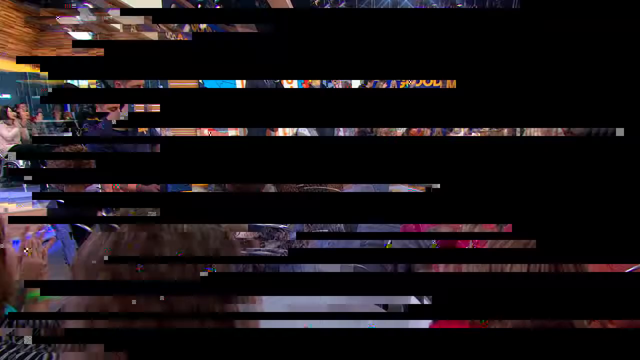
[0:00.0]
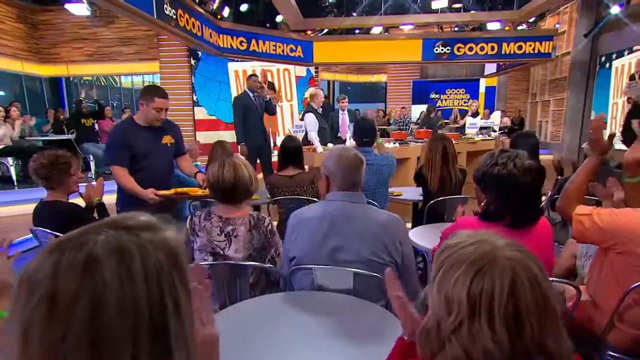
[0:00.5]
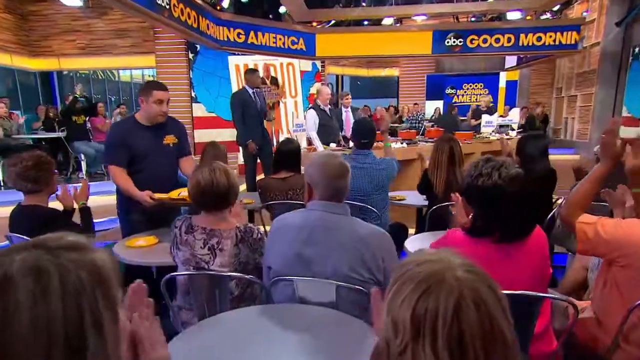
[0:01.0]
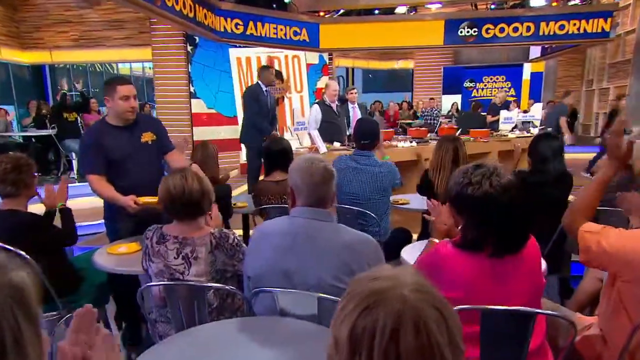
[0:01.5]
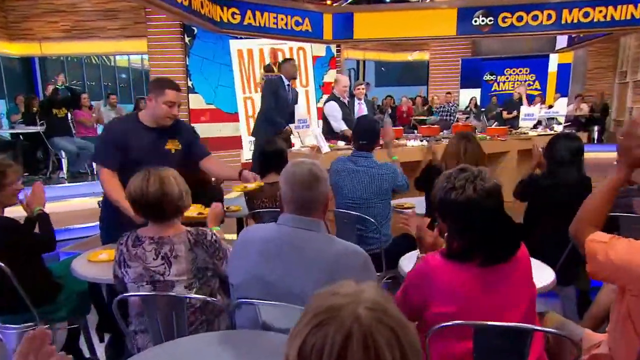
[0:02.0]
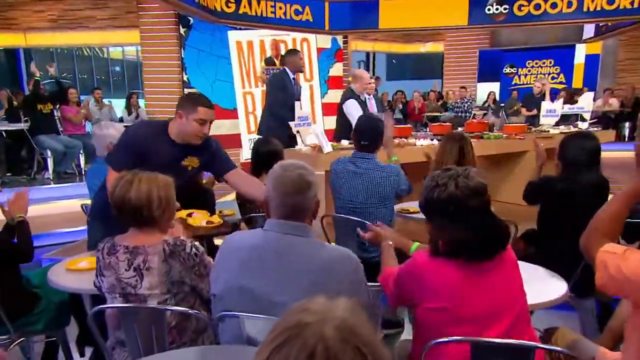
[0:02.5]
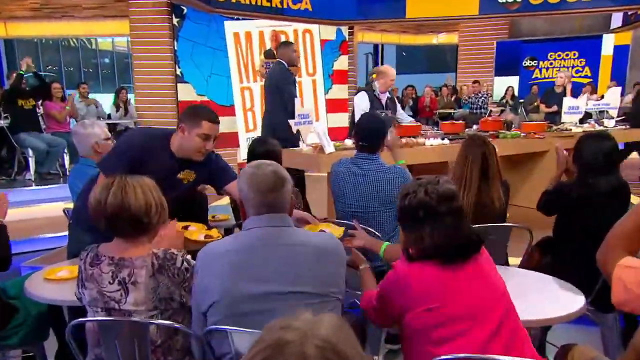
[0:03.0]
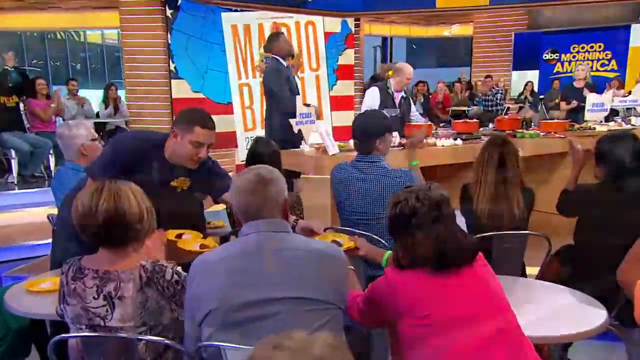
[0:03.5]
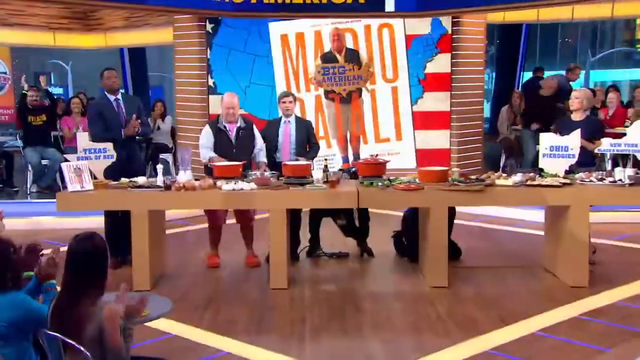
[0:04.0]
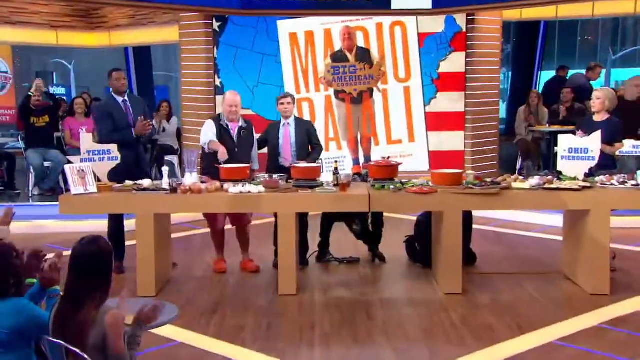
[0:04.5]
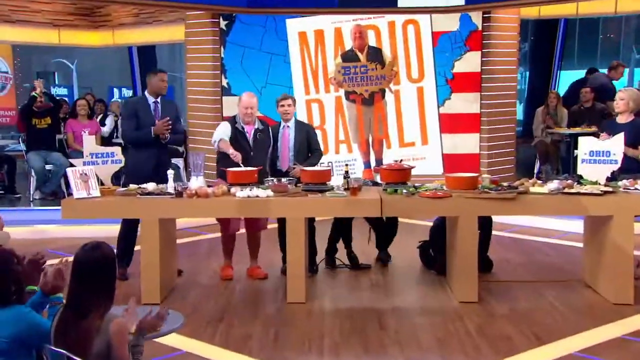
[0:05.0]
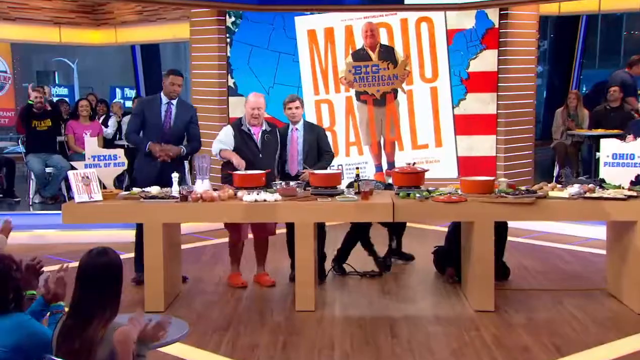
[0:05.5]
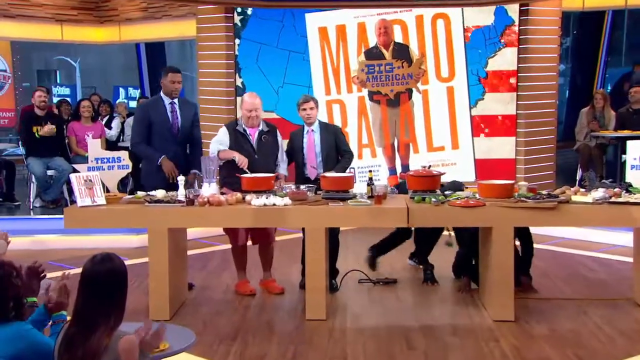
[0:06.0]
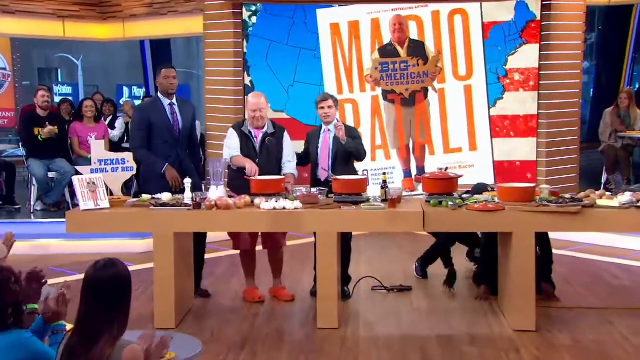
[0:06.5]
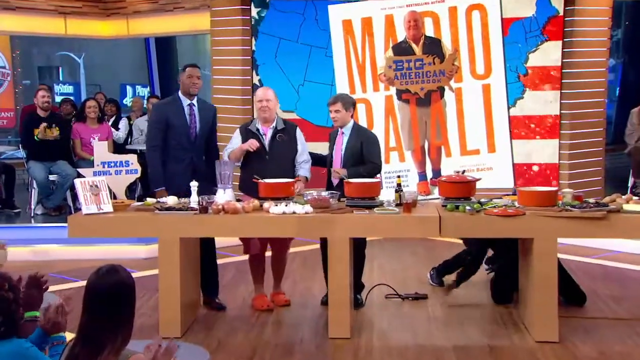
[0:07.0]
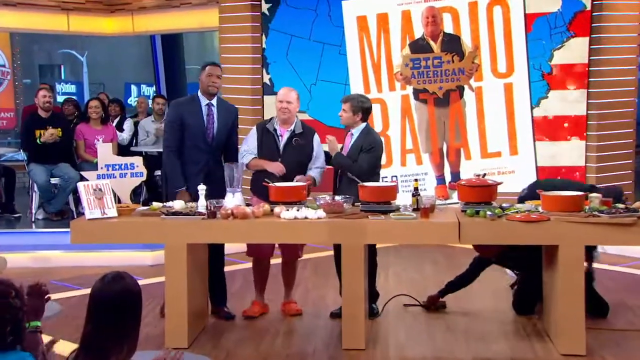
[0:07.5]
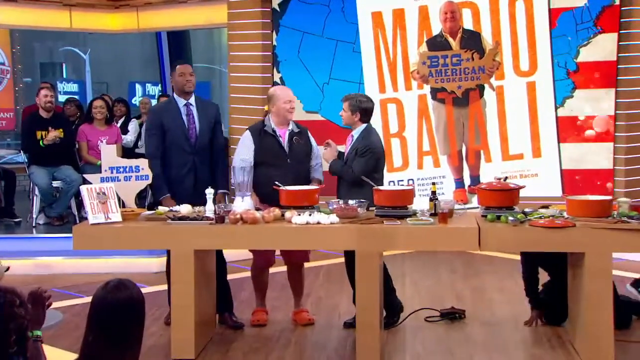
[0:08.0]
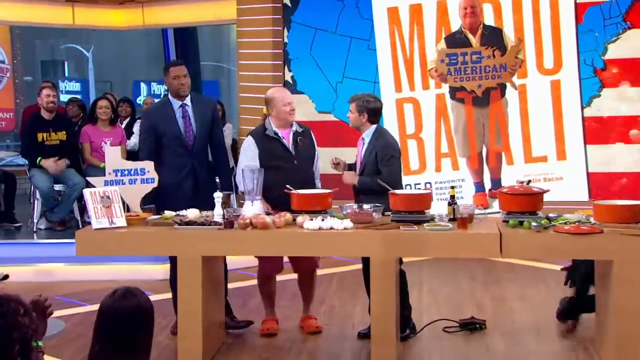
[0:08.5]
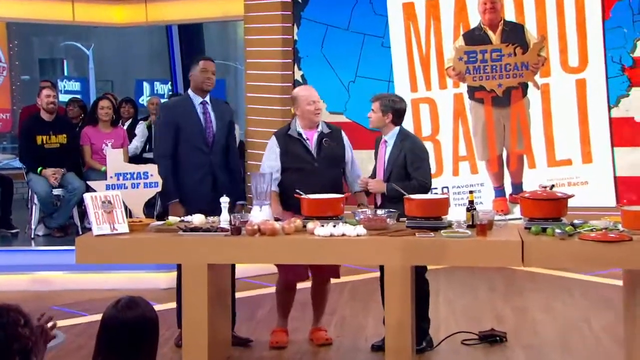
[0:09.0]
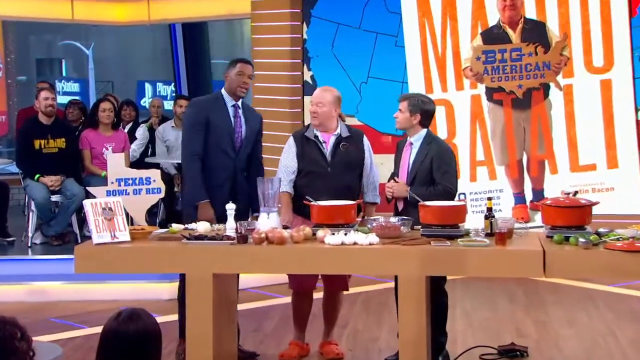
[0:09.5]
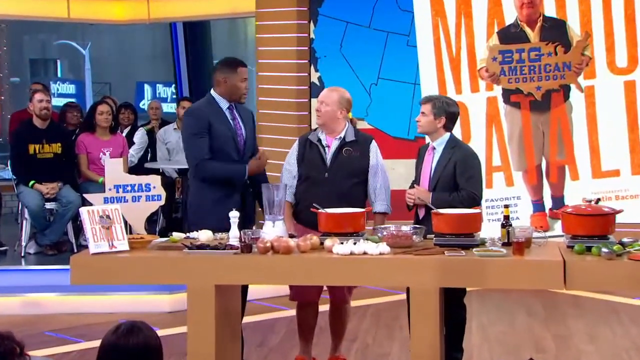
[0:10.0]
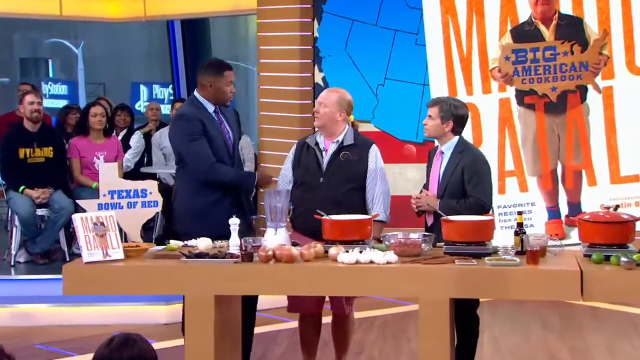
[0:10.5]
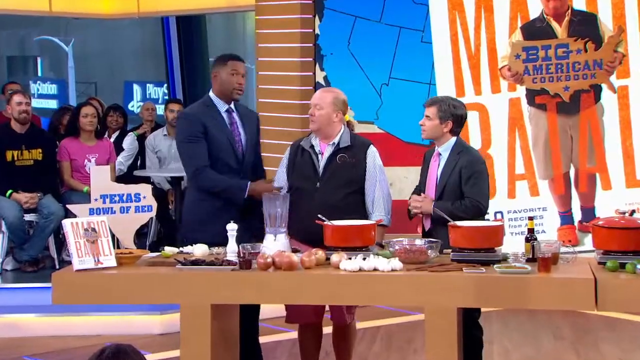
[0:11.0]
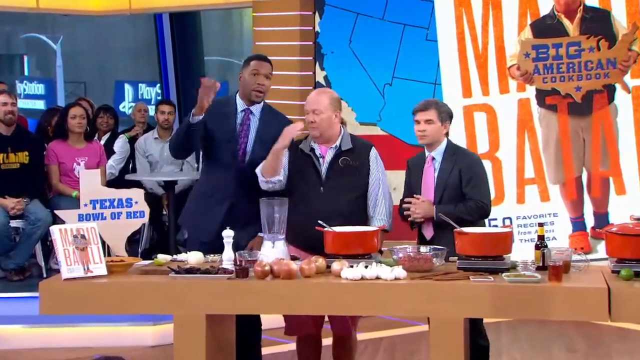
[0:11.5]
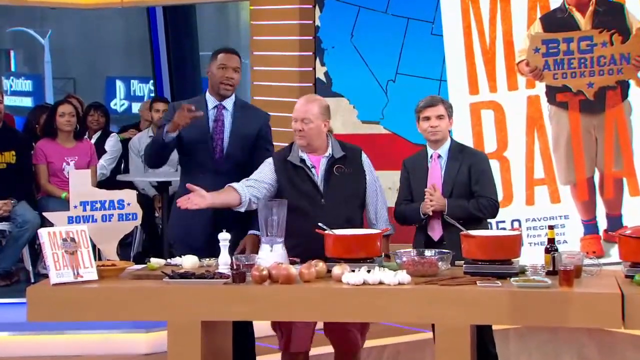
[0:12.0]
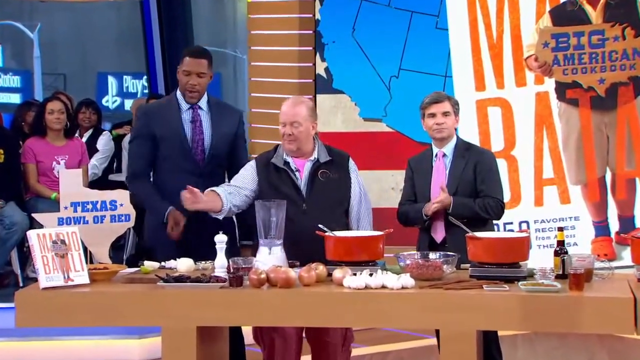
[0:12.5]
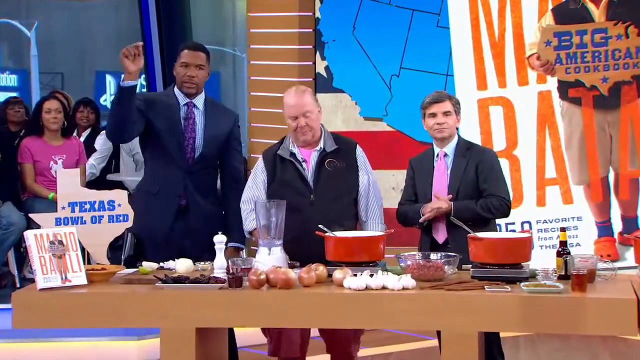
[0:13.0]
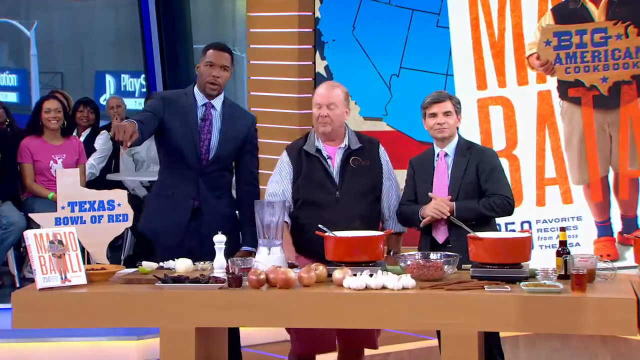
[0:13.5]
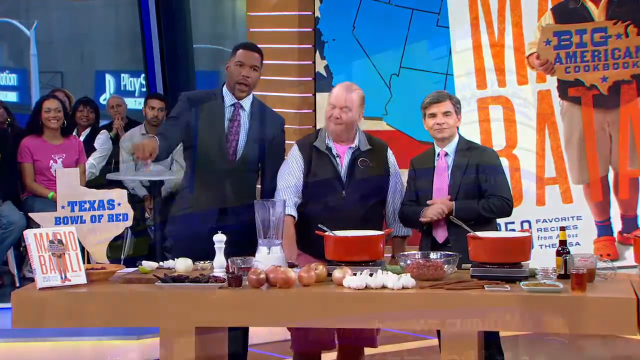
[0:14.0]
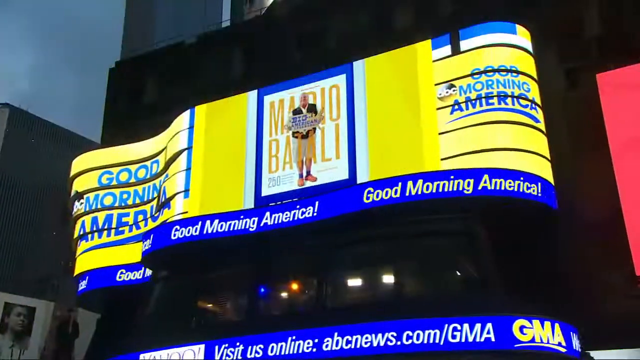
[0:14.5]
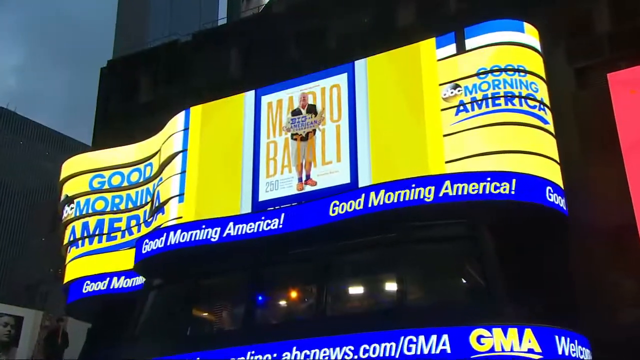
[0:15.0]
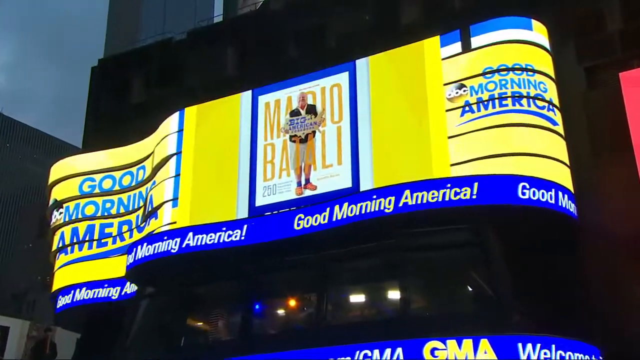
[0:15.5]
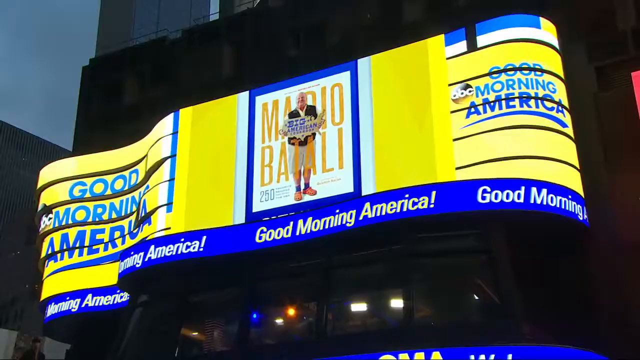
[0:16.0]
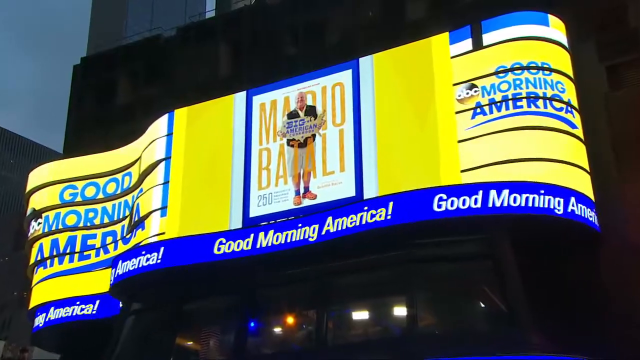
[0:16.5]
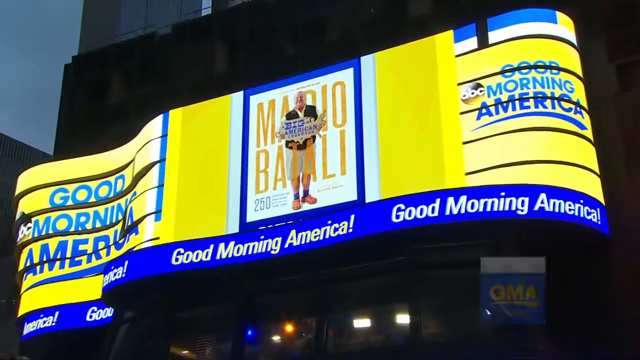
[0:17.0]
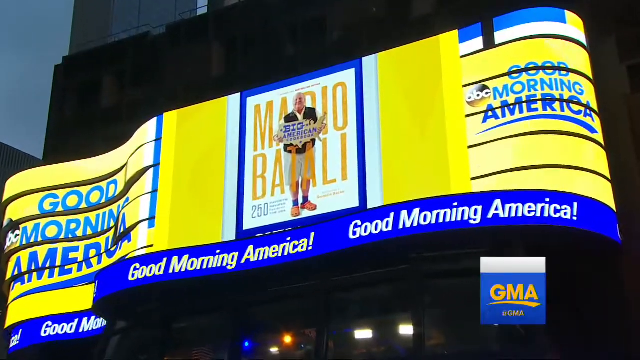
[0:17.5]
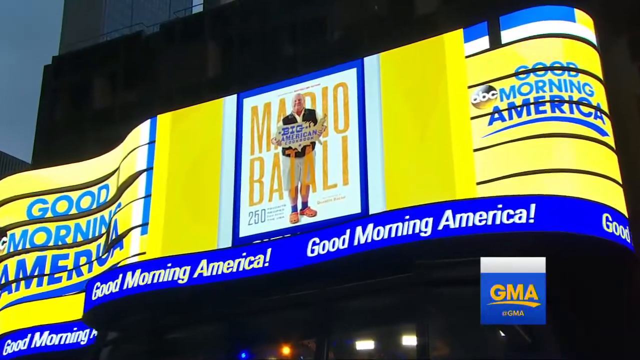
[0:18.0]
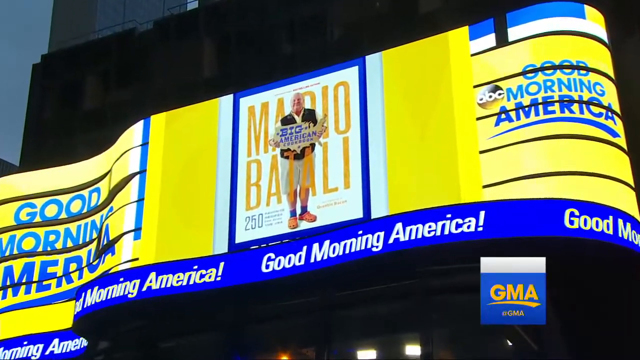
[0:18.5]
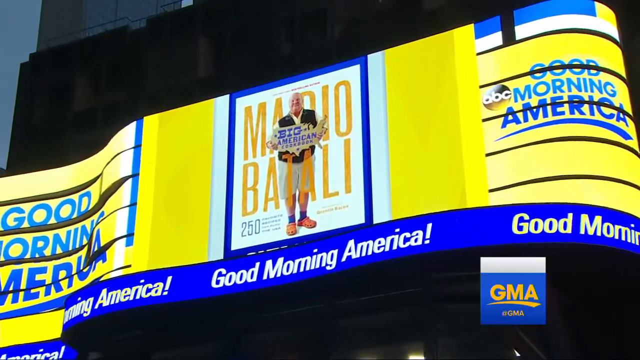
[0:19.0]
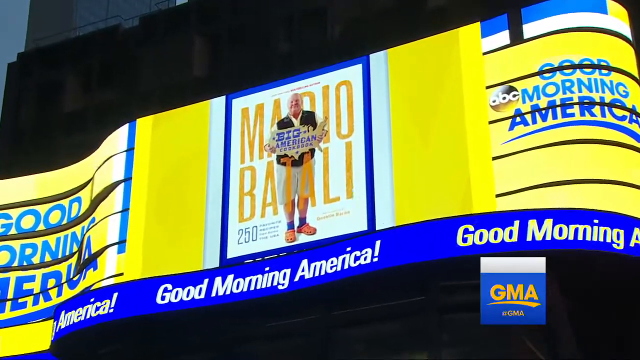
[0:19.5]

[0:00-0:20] The camera shows the backs of a lot of people's heads, in what seems to be the recording of a talk show. Men and women sit close to each other on silver chairs. On the left side, another group of people sits on chairs, and a waiter serves people food. The camera pans to them clapping a lot, and in the very back the title of the show is visible: "ABC Good Morning." People clap and smile, getting ready for the show. The view then changes to the front of a table holding a lot of kitchenware, including a bunch of red pots: two on the left side have no lids, one on the right side has a lid, and another one, without a lid, is on the one with the lid. Three men converse with each other at the table and seem prepared to cook some food. One is a taller black man, and the other two are shorter white men.